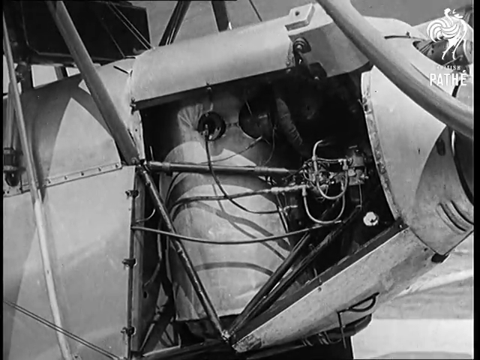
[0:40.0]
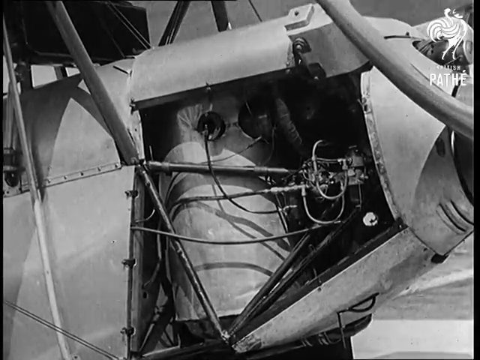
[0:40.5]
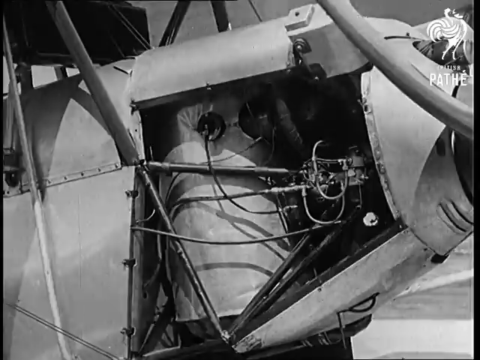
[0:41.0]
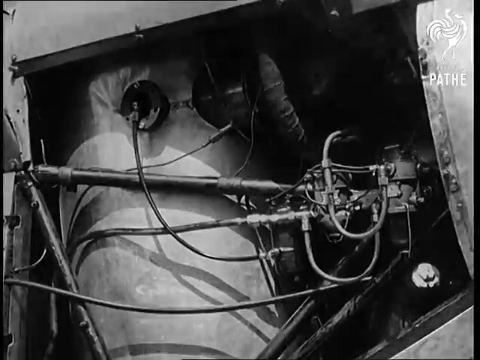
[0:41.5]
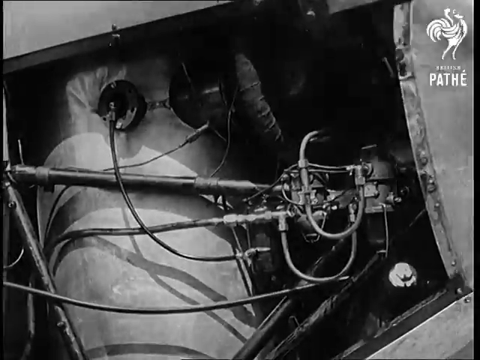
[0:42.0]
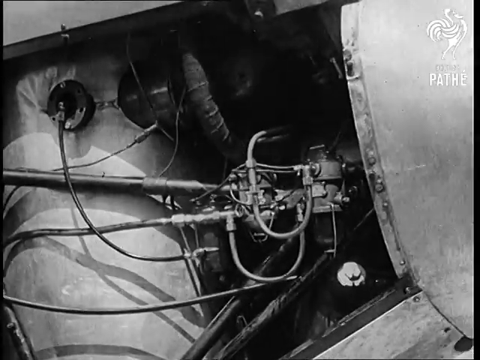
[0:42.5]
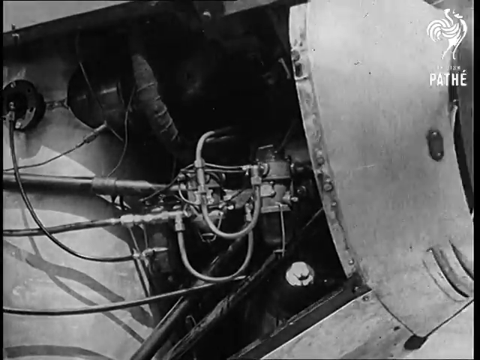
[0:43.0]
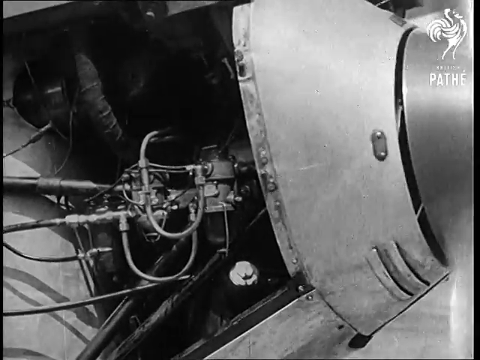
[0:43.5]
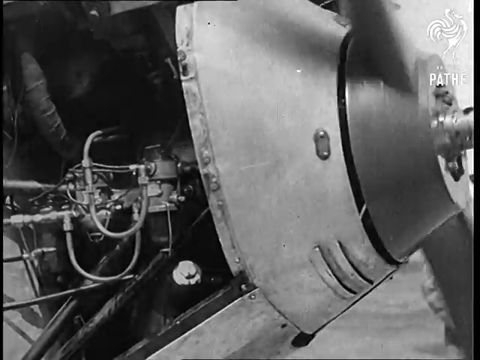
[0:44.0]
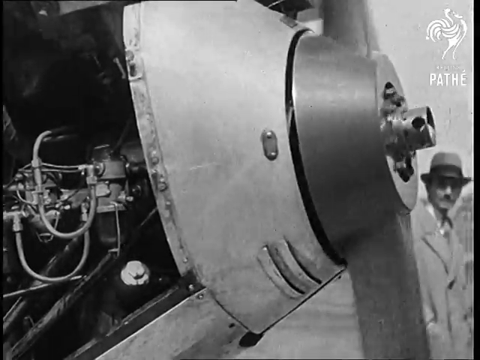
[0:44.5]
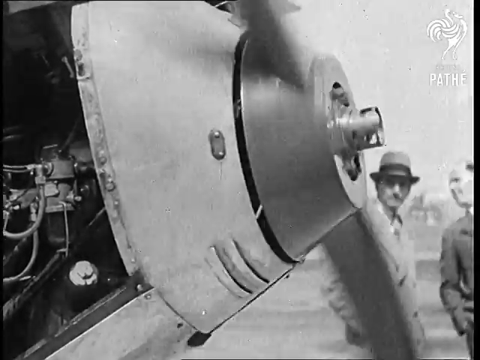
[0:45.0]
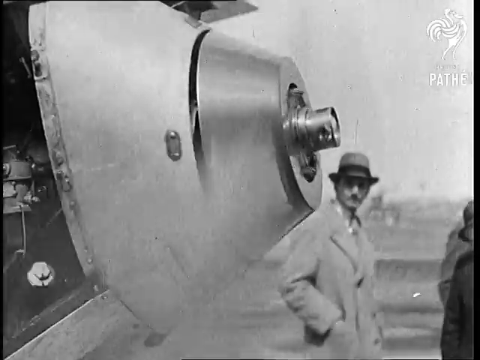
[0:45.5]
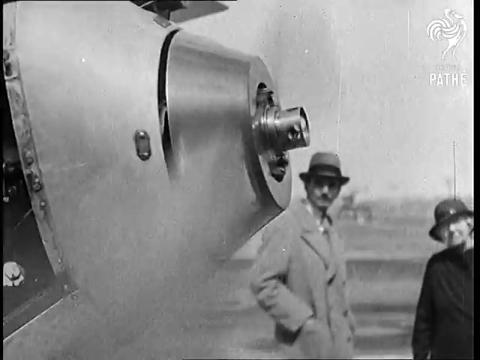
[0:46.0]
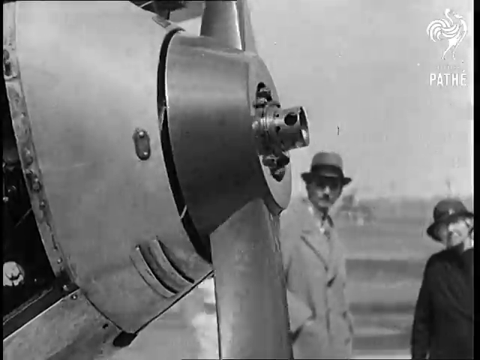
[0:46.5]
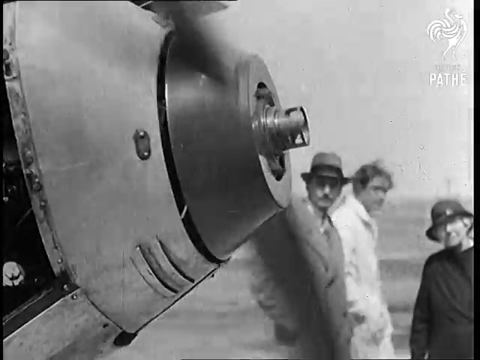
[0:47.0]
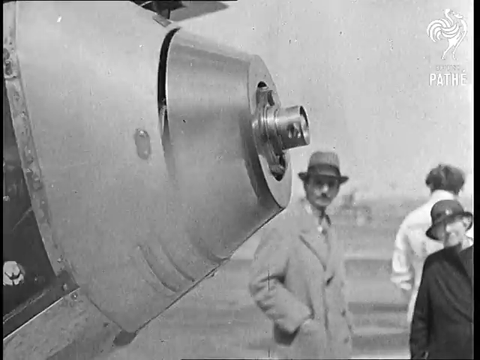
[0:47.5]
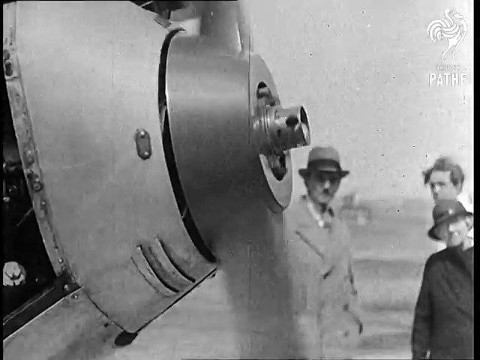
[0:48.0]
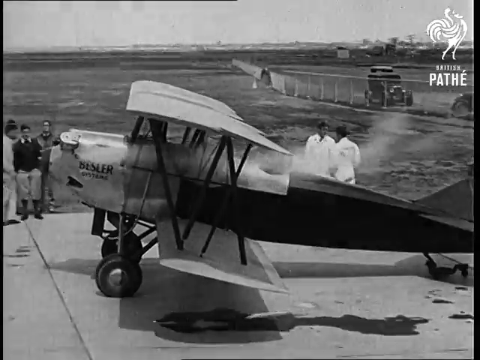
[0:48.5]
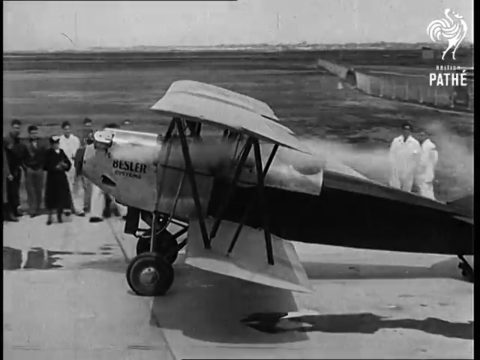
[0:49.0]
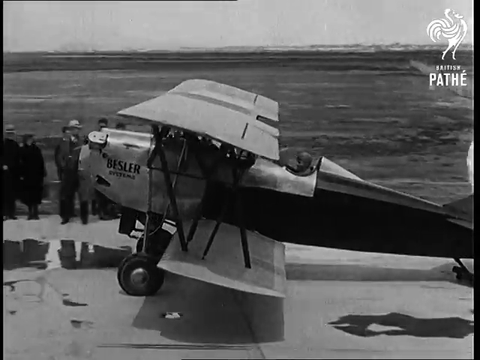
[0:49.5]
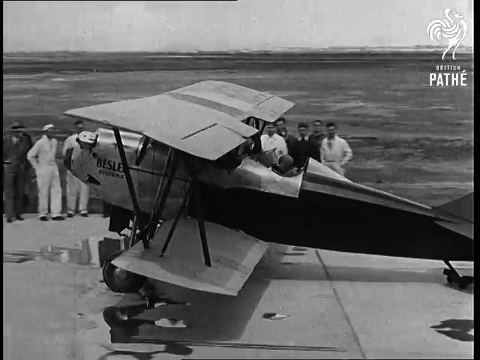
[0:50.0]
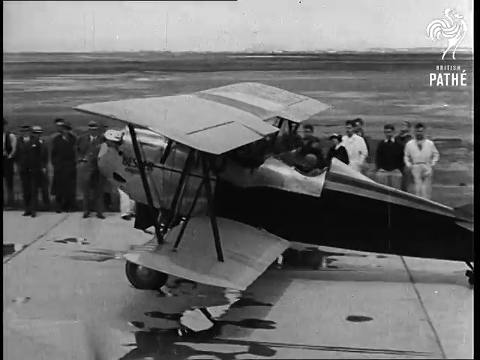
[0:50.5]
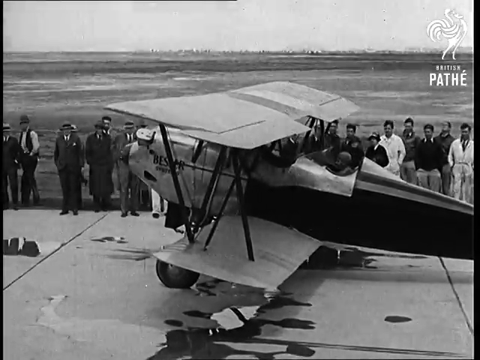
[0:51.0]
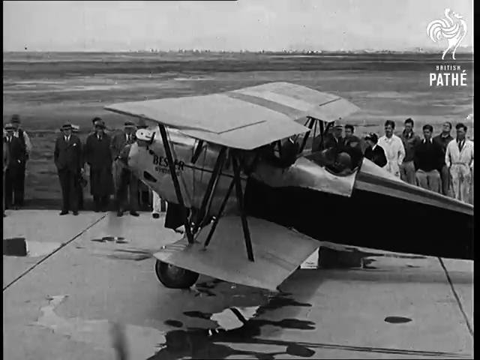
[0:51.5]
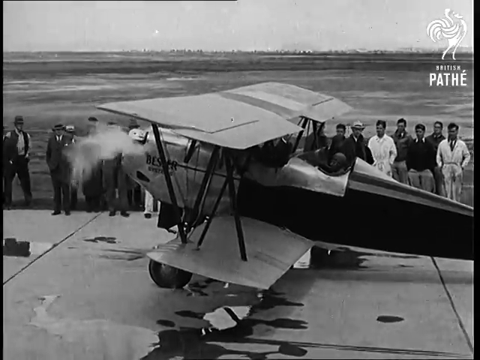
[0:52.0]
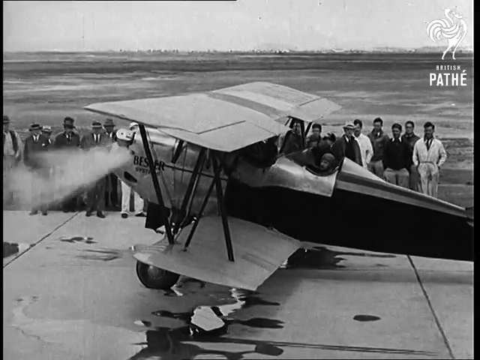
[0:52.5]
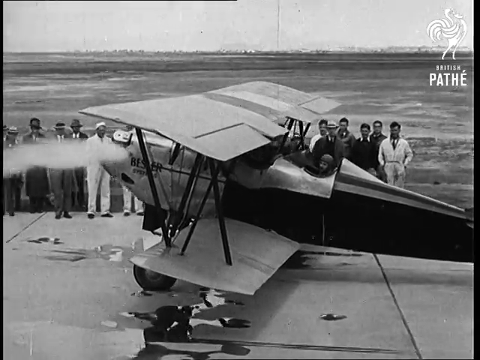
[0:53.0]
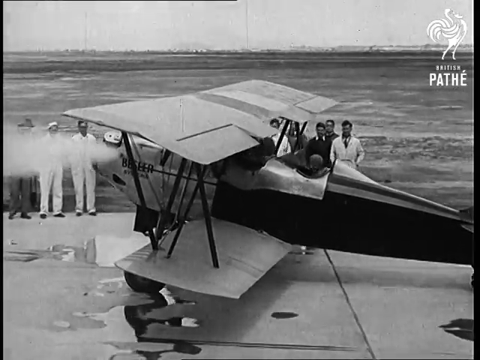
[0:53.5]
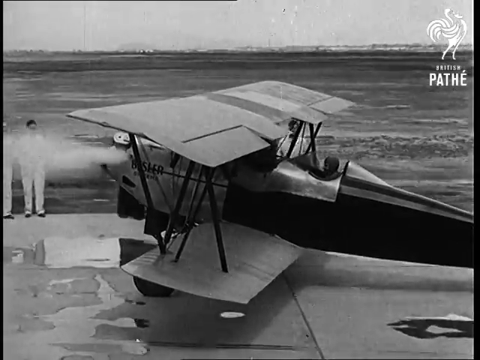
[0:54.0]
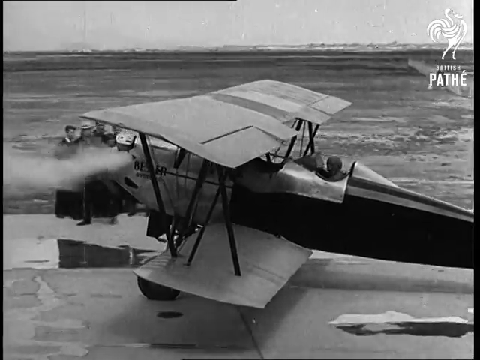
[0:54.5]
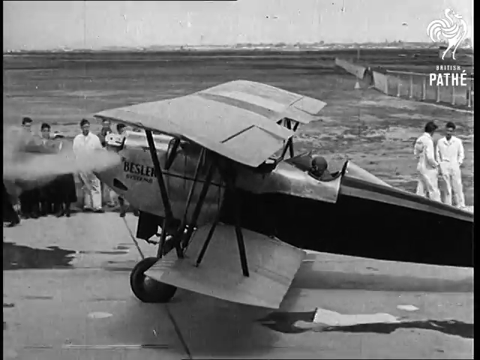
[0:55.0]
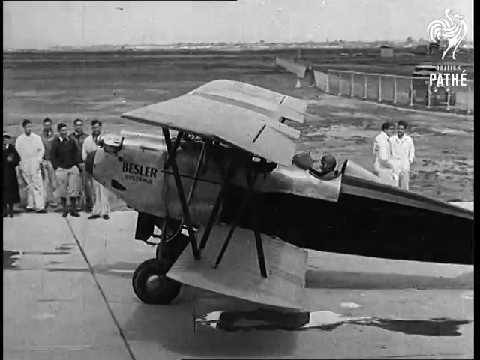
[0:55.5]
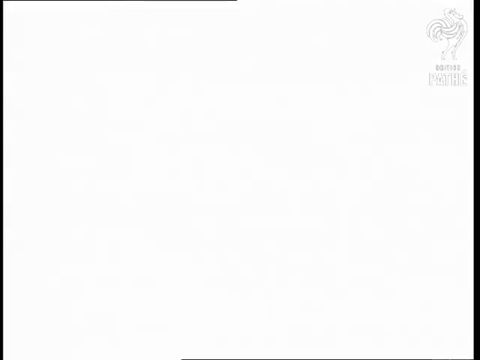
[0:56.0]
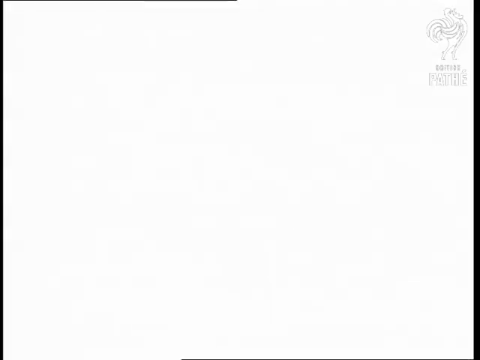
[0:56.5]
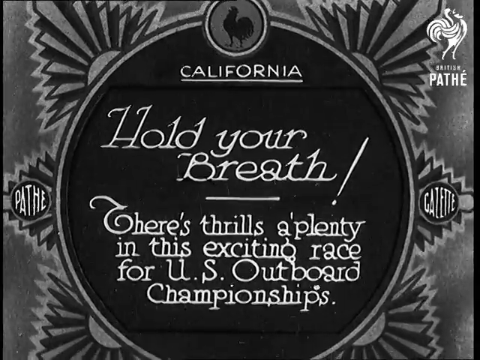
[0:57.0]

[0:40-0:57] The close-up of the engine shows wires, tubes and metal pieces going in and out of it. The camera moves slowly, roughly left to right, until the very front of the airplane and its propeller, spinning very fast, come into view. The shot transitions to a side view looking directly at the airplane as it starts to move from right to left, with people in the background staring as it moves. At the very end of this shot the airplane starts to go in reverse, and smoke comes out of the front tip of the airplane right where the propeller is, coming out toward the left almost parallel to the ground; a lot of steam comes out of that one little area. The video finishes with an image bearing white text on the front that reads "California, hold your breath, there's thrills aplenty in this exciting race for US Outboard Championships."